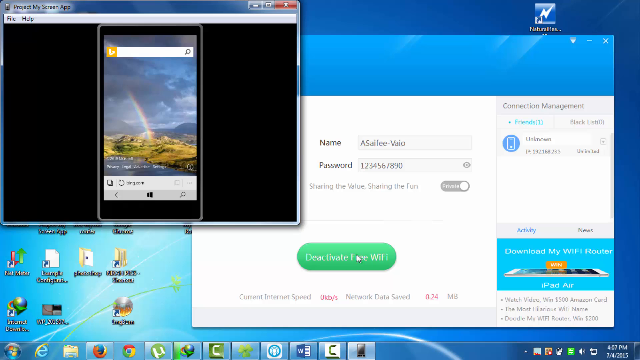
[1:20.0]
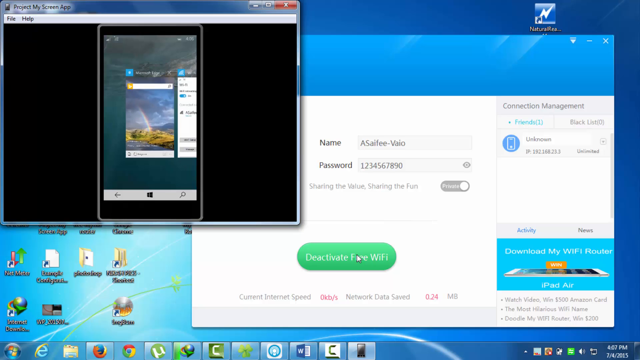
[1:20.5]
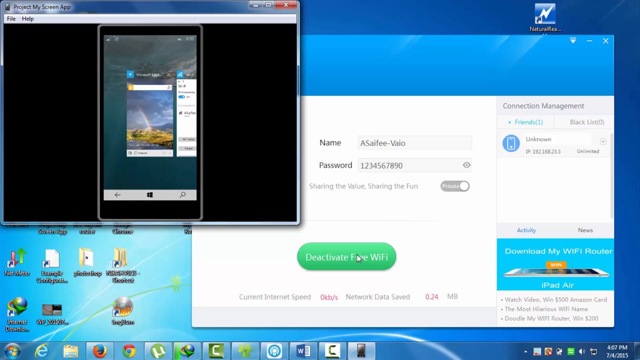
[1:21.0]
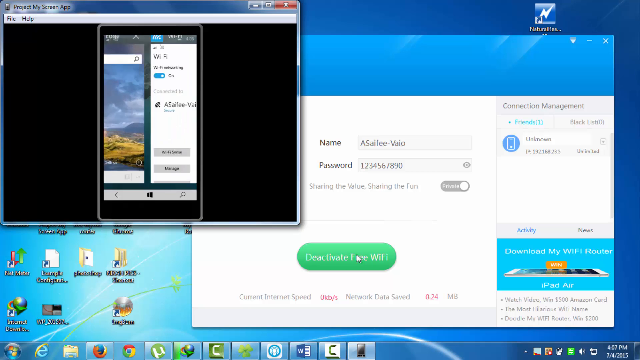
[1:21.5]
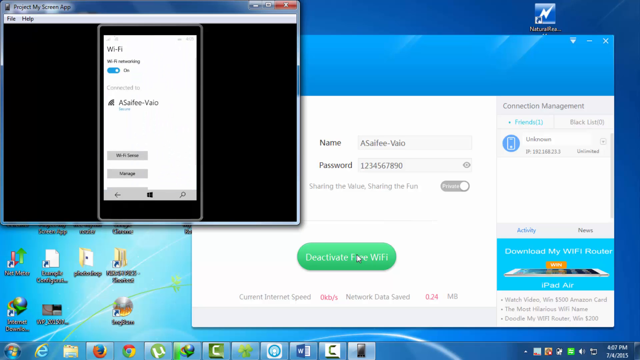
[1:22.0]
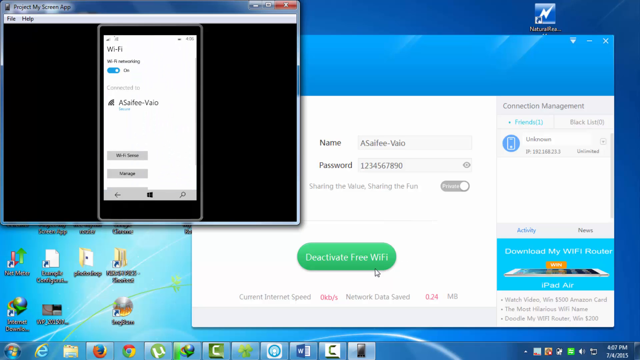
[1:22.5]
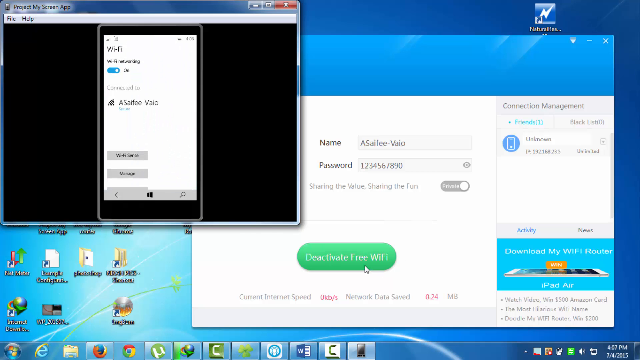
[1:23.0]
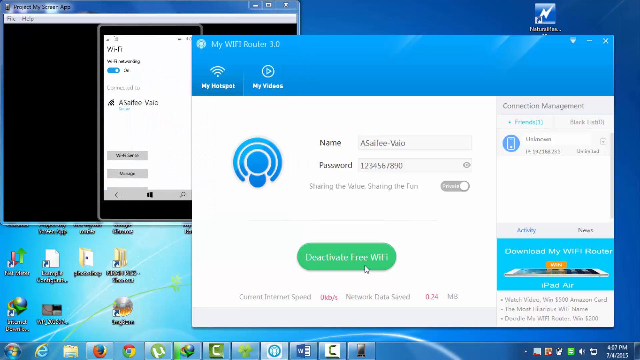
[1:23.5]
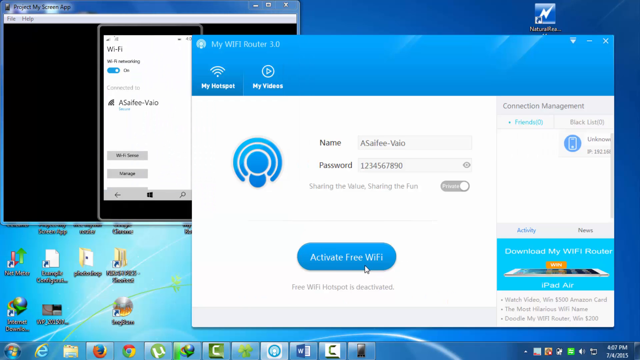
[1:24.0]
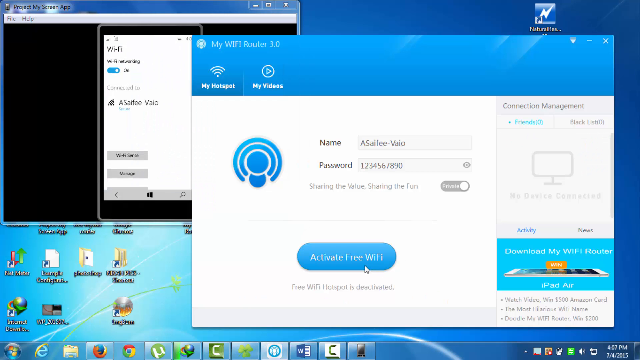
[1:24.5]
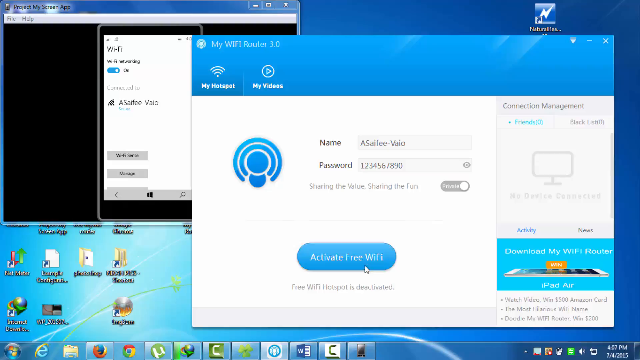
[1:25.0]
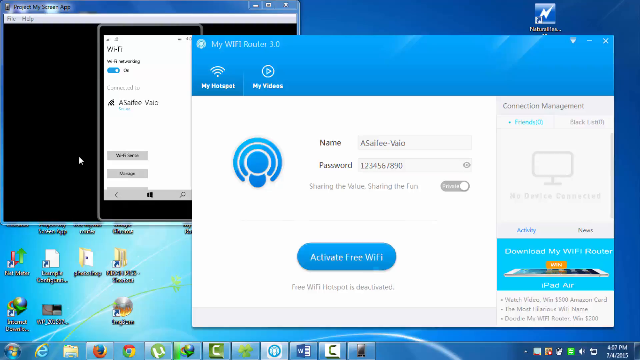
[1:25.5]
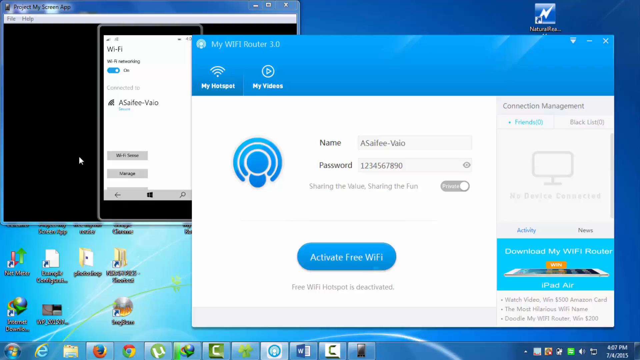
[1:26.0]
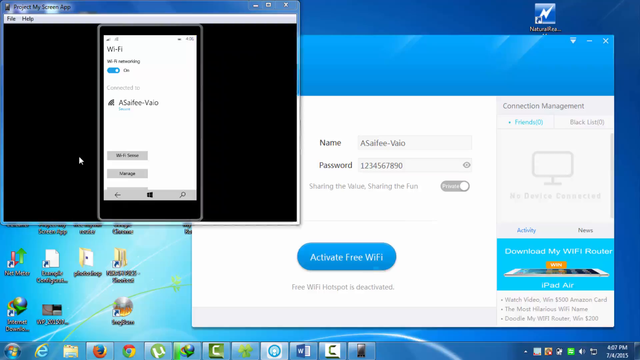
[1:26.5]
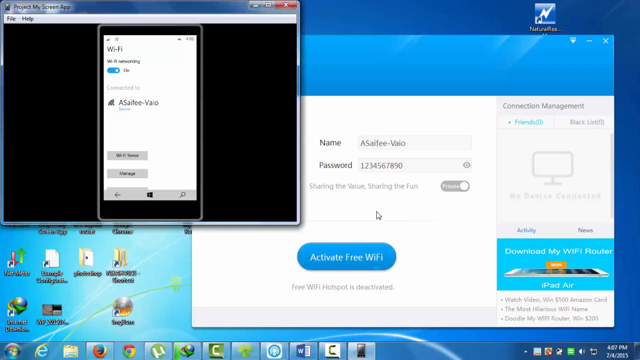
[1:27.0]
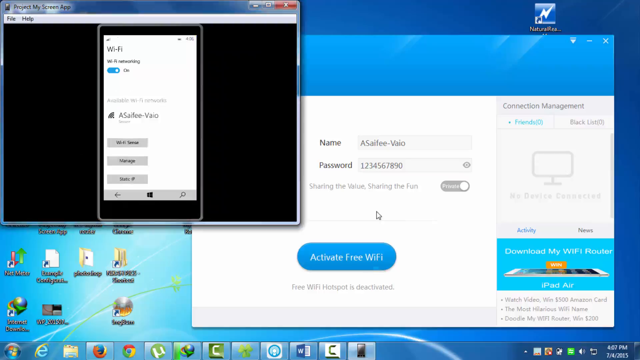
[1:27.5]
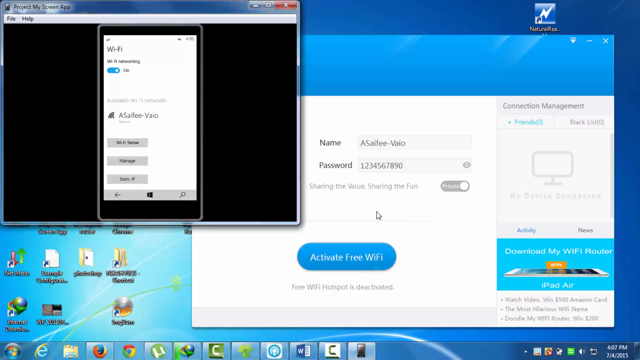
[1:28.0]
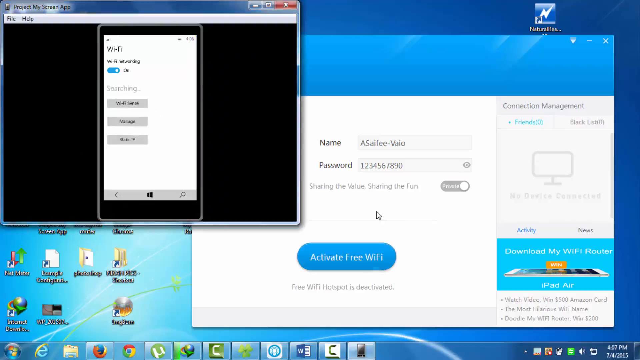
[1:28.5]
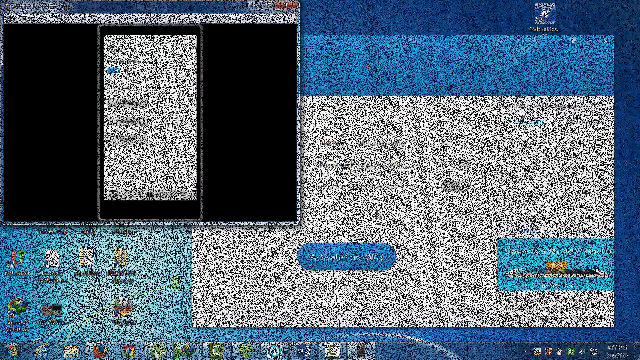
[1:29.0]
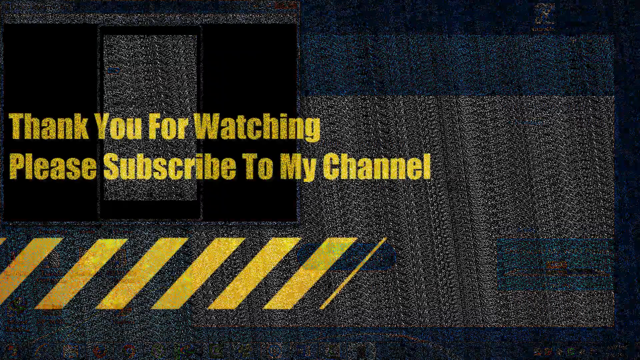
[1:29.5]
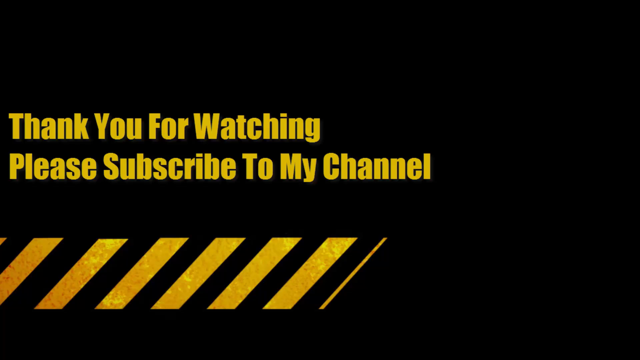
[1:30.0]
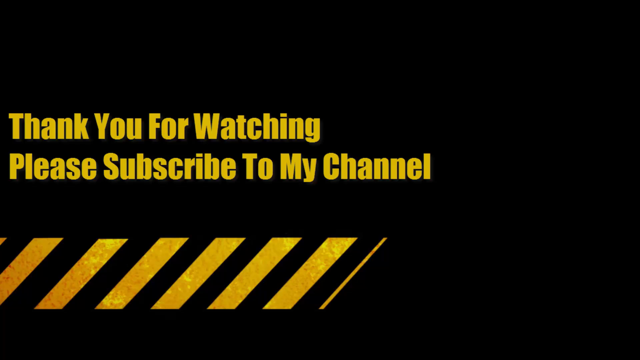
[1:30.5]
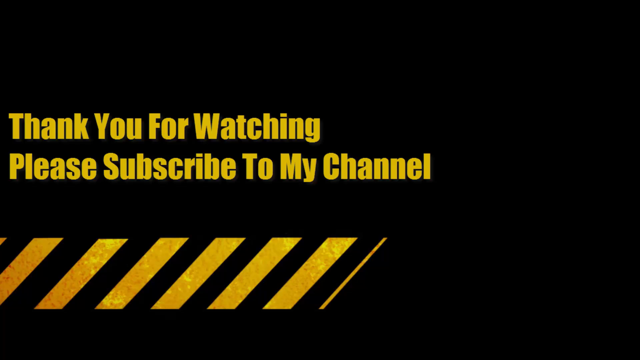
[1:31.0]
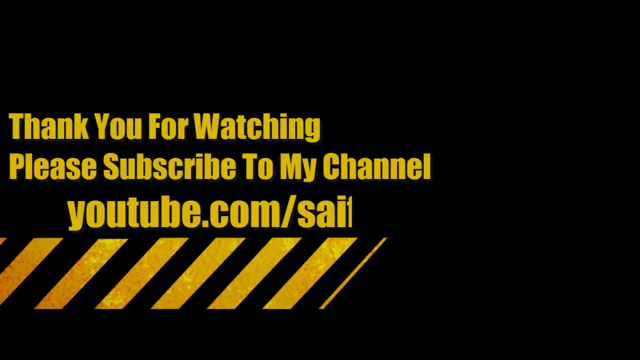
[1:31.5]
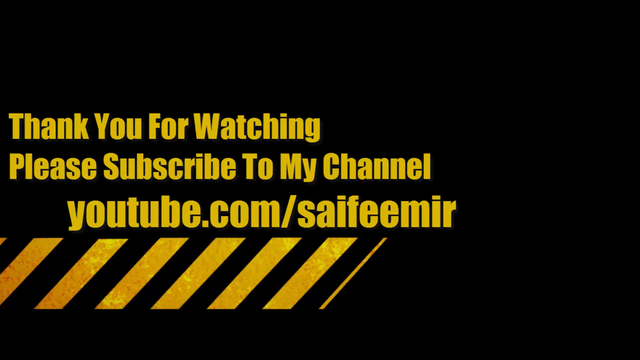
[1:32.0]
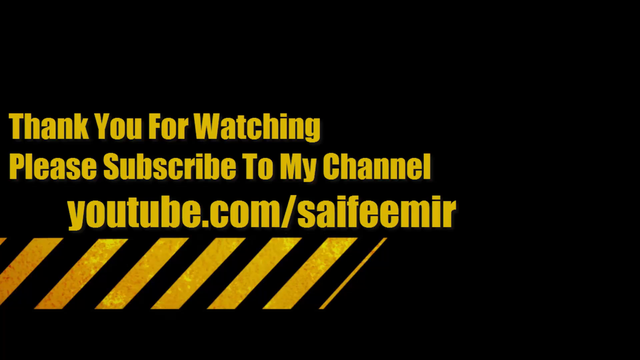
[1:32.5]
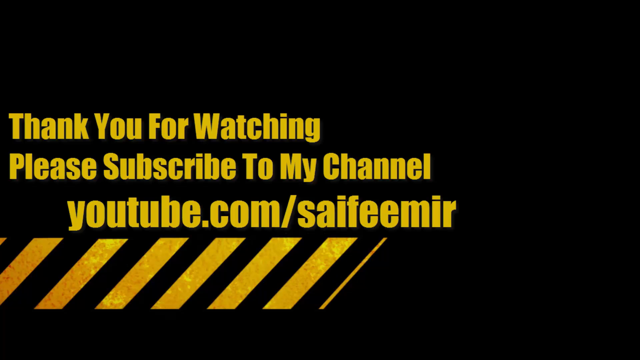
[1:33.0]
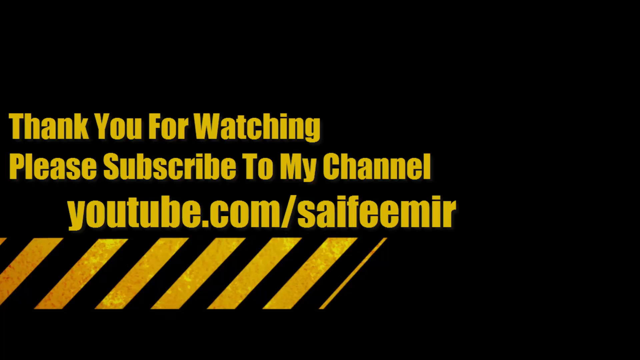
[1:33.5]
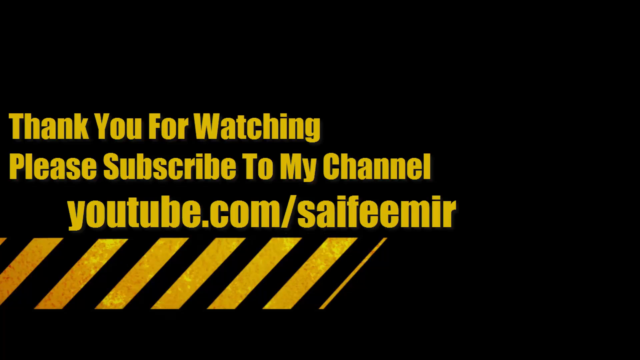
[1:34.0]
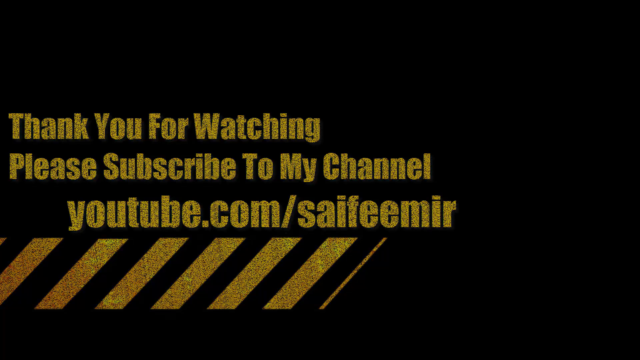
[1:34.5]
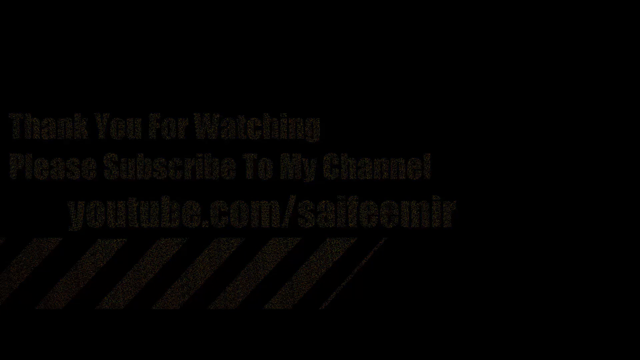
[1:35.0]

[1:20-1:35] In the conclusion, after Wi-Fi is turned on on the phone and the My Wi-Fi Router application installed on the laptop is used, the phone is able to connect to the hotspot.